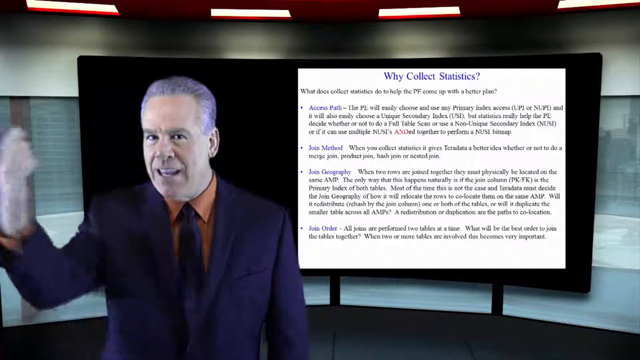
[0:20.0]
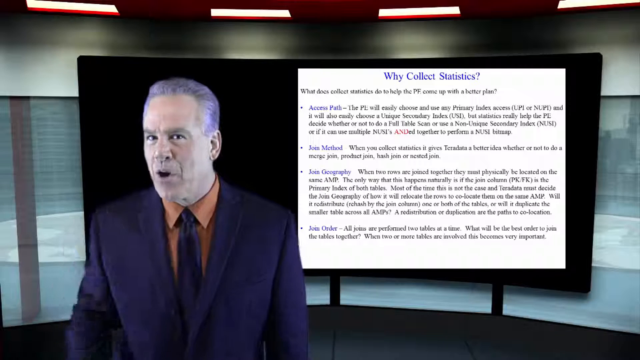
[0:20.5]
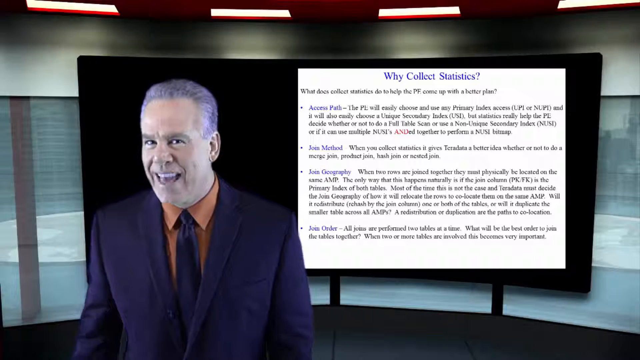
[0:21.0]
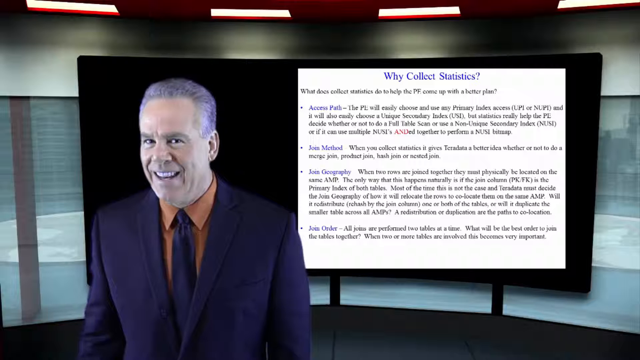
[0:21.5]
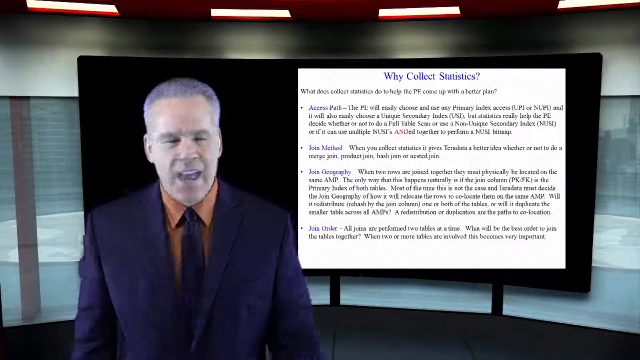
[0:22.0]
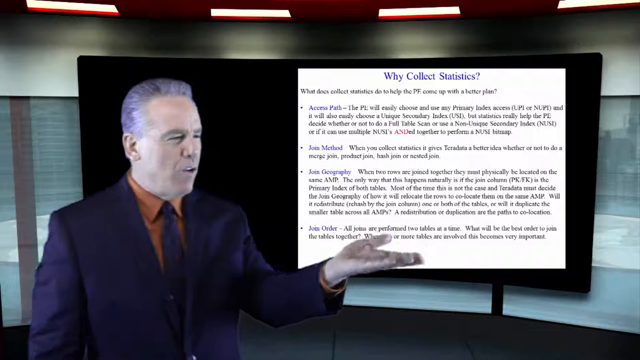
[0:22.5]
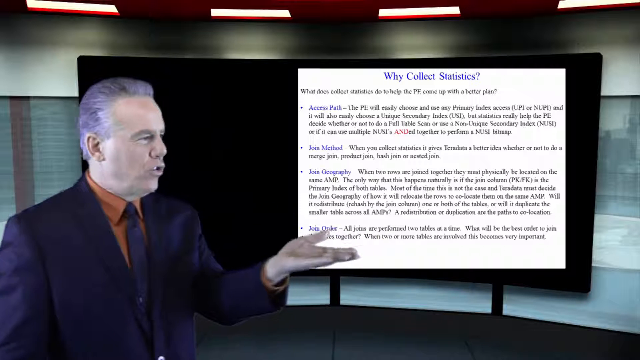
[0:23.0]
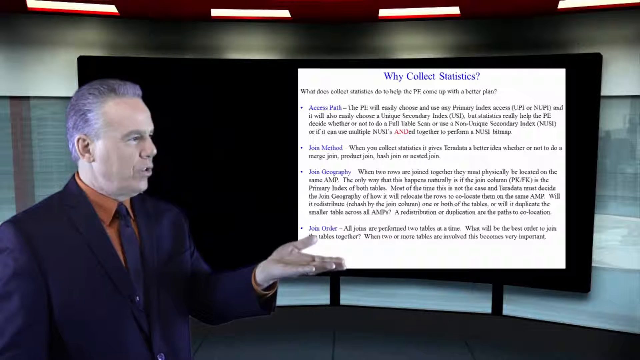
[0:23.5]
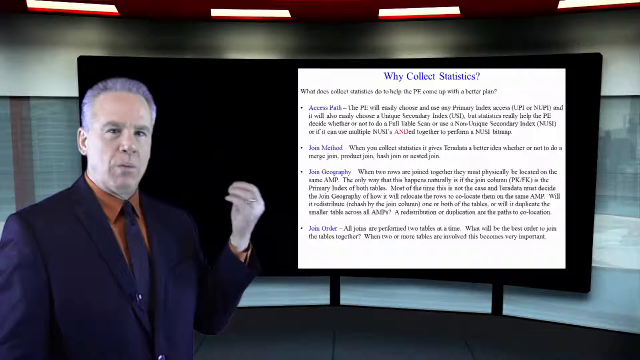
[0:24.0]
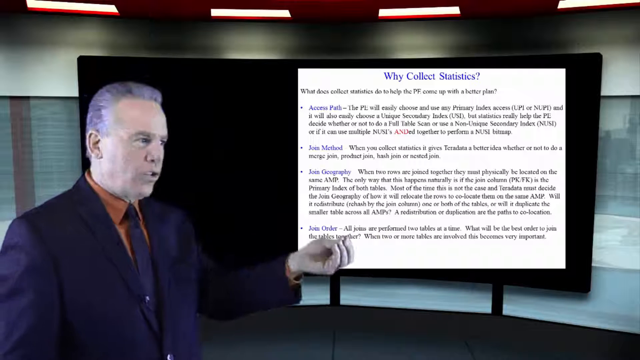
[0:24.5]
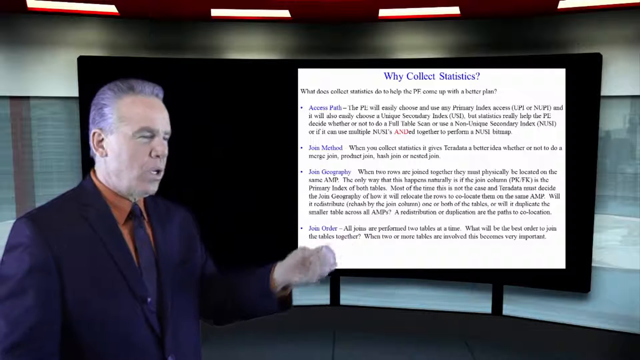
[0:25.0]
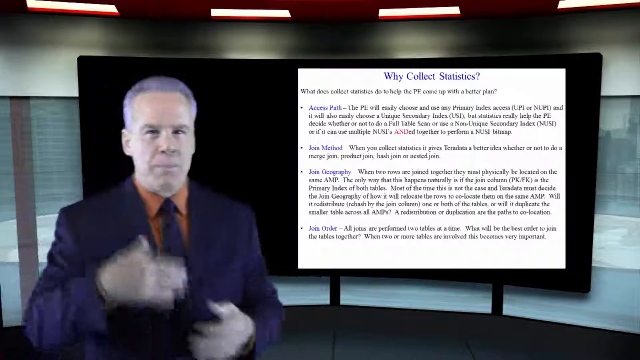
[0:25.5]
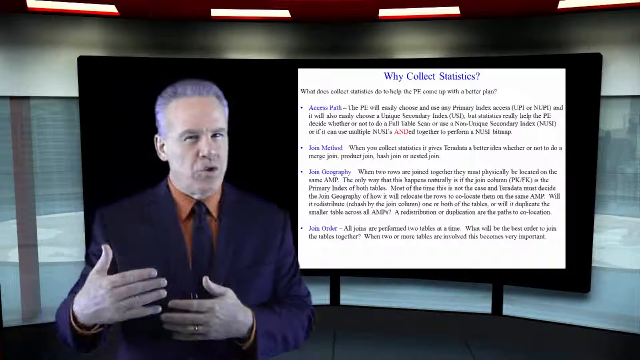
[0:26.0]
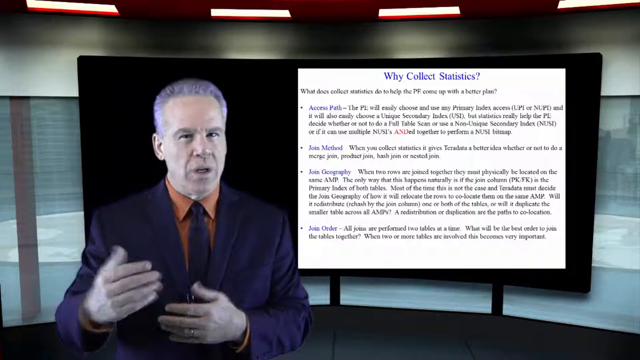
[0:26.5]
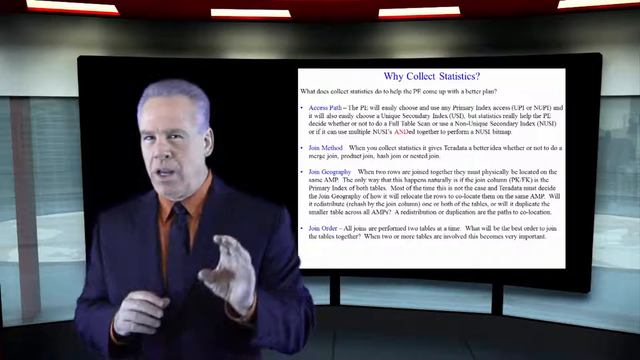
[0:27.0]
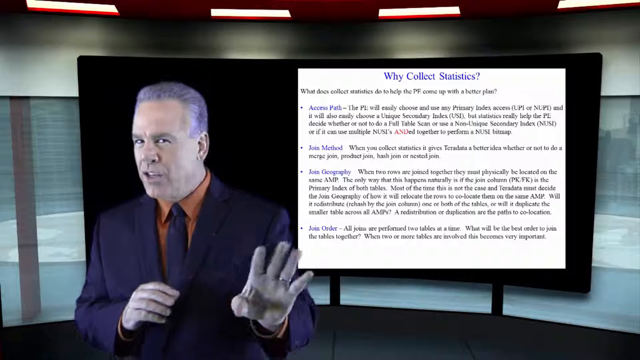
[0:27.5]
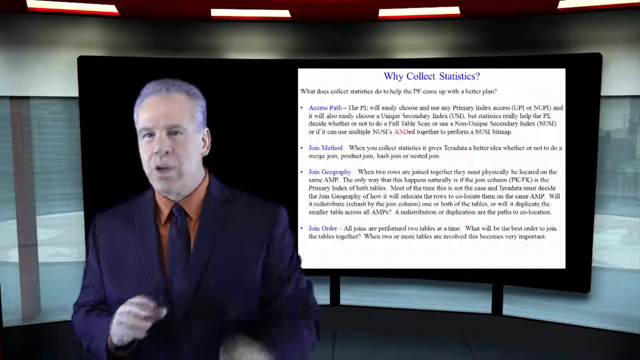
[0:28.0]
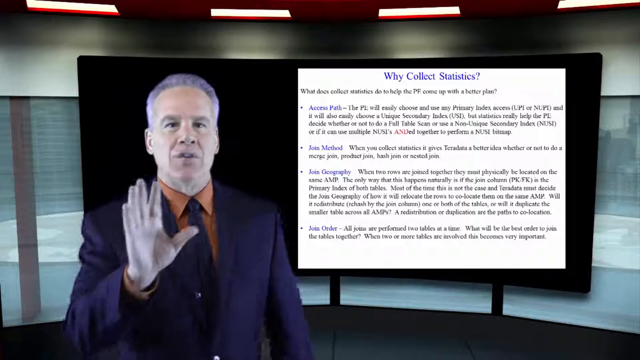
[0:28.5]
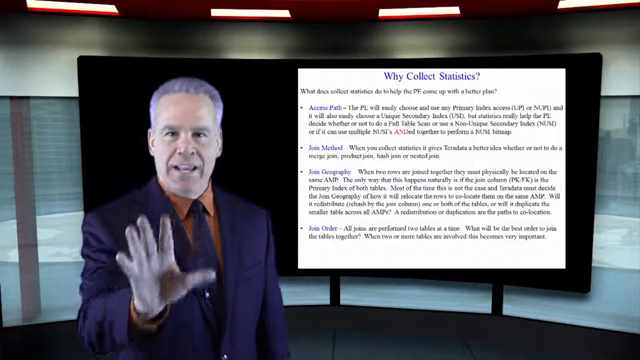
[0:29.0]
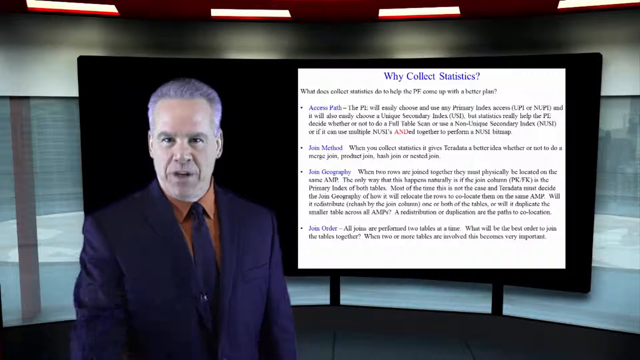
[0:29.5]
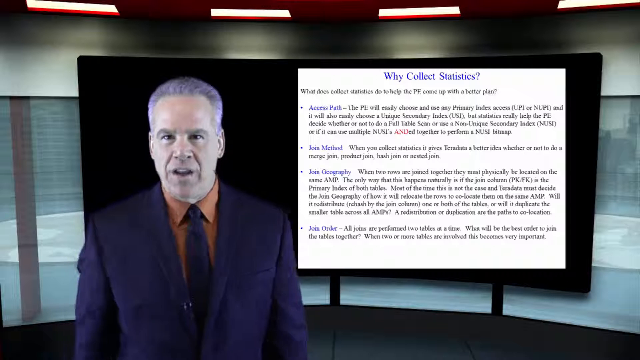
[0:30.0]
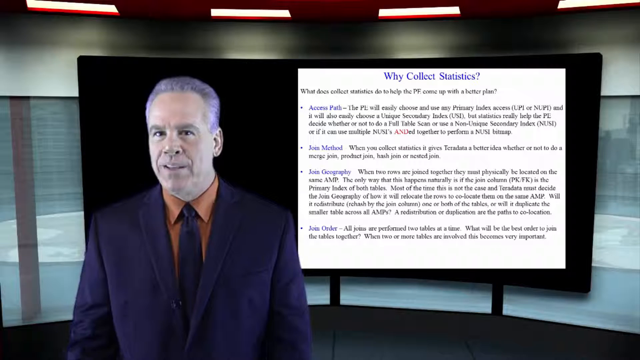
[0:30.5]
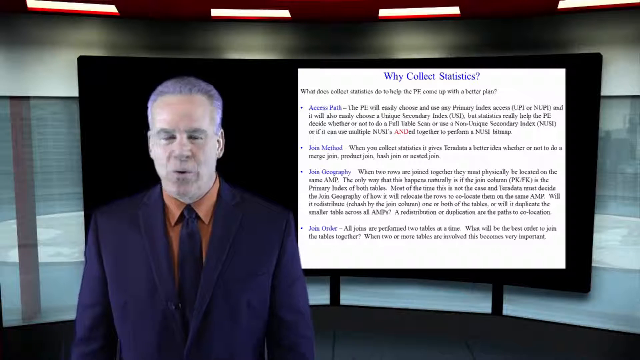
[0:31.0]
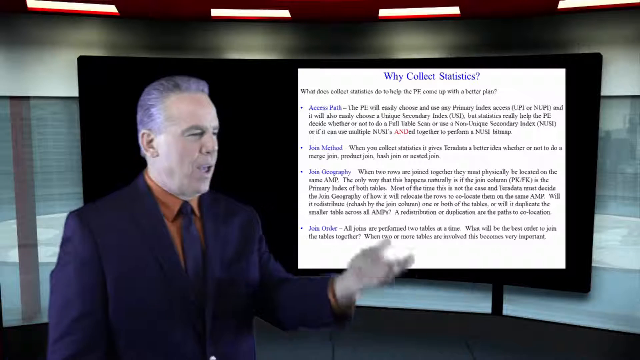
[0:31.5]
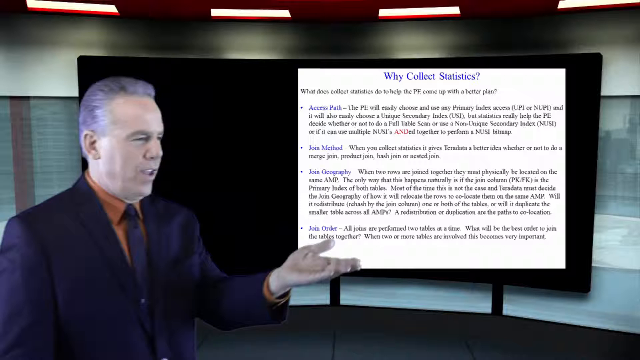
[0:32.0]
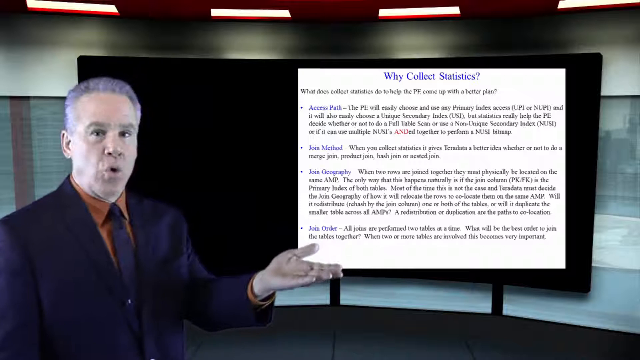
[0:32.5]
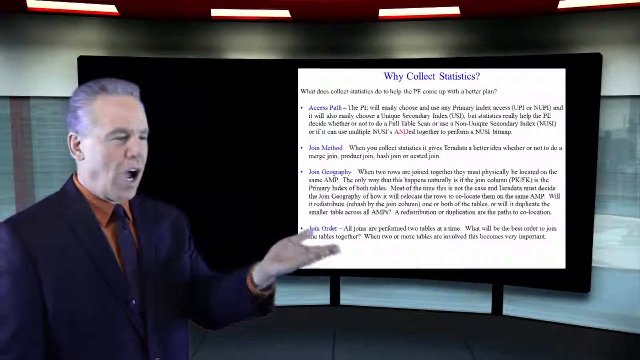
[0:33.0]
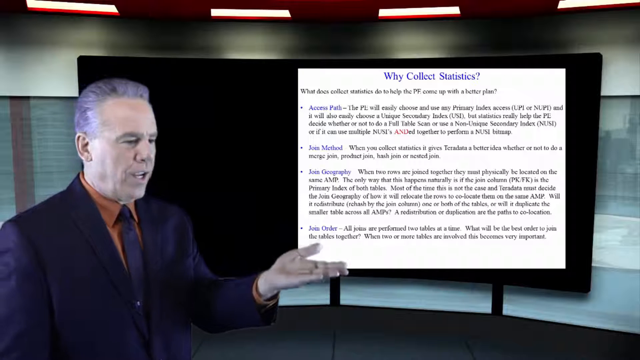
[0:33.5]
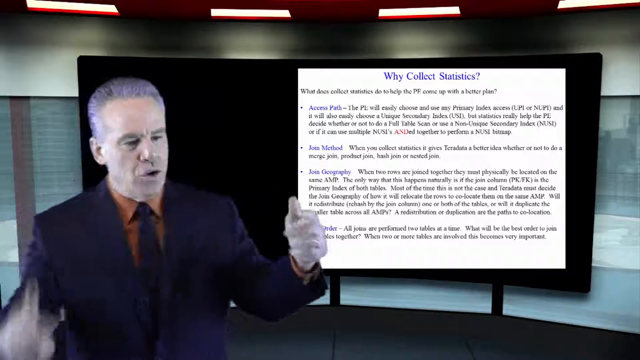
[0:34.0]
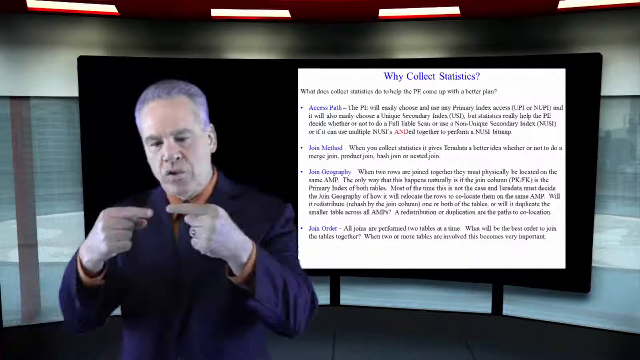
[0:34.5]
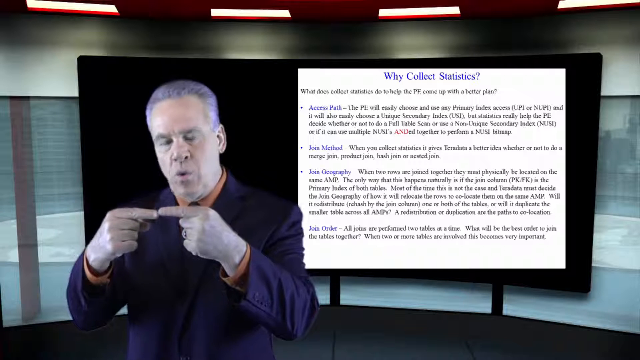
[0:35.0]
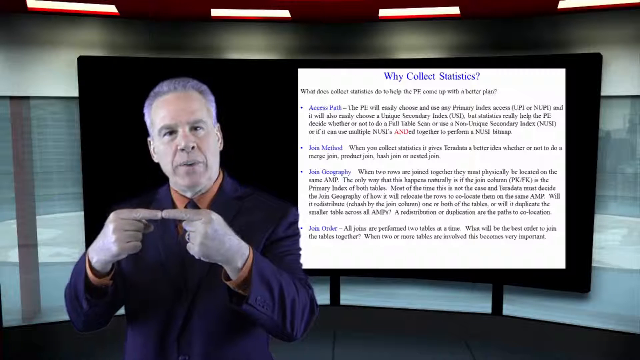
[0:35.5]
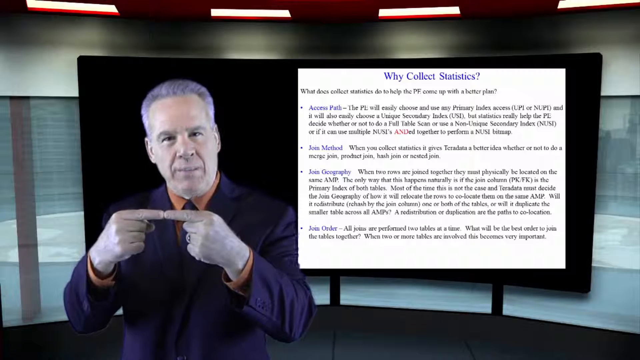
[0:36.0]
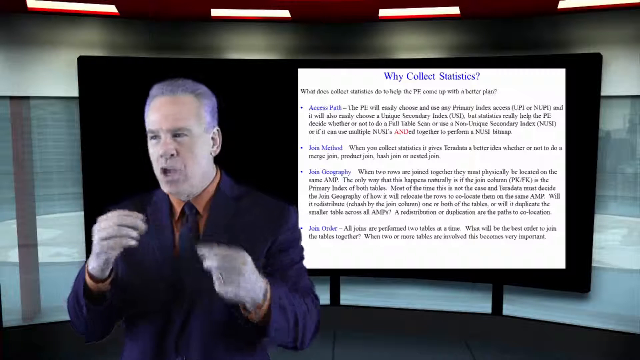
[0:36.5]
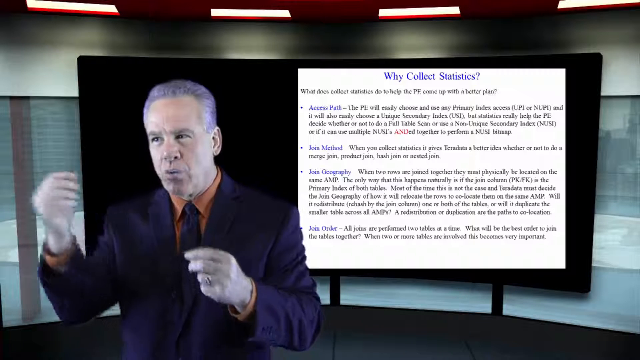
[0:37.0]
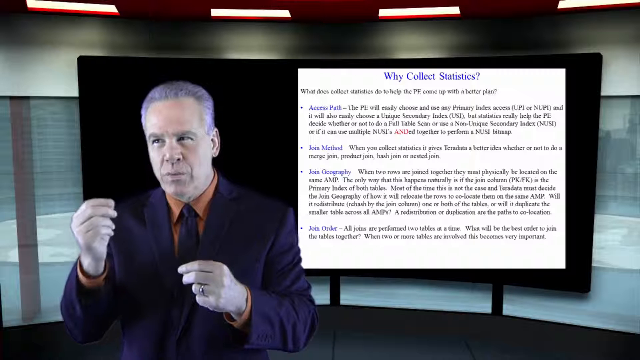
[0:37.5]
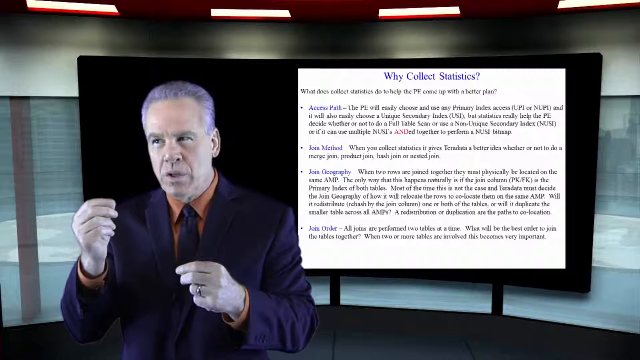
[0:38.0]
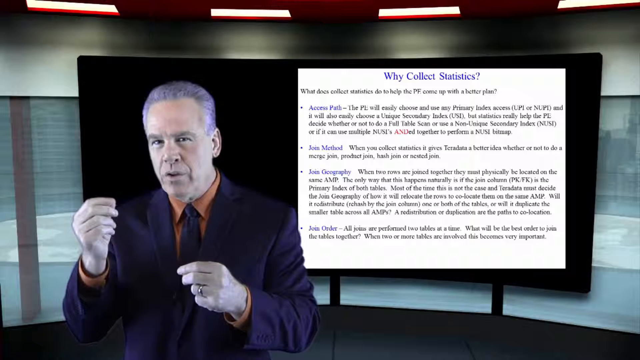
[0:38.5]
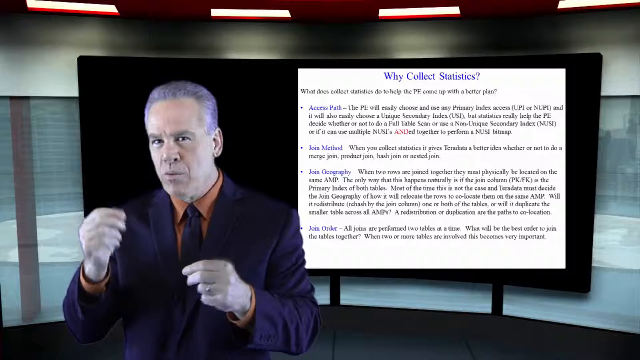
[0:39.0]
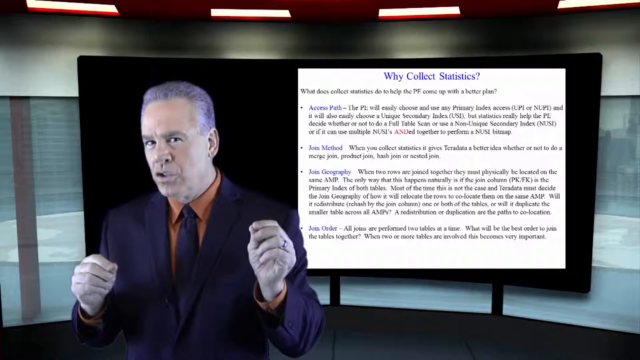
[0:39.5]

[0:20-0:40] A Caucasian man with short, darkish gray hair, wearing a dark suit and tie and a brown long-sleeve shirt, stands with a large computer or slide screen to his left. The screen is white with several paragraphs of black text too small to read, under the title "Why Collect Statistics?" He smiles and talks, gesturing with his hands and repeatedly towards the screen, and seems quite animated about his subject. At one point he brings both index fingers together so the tips touch. The video is perhaps in the style of a video lecture that a professor may be giving.